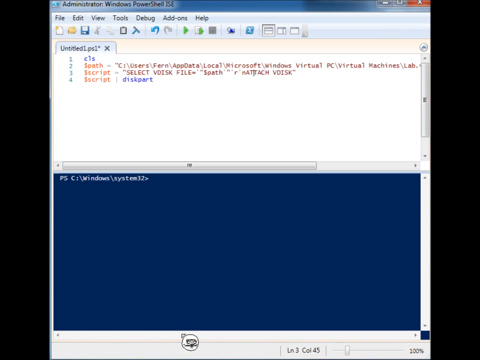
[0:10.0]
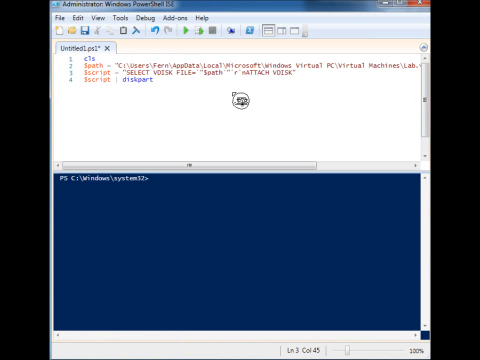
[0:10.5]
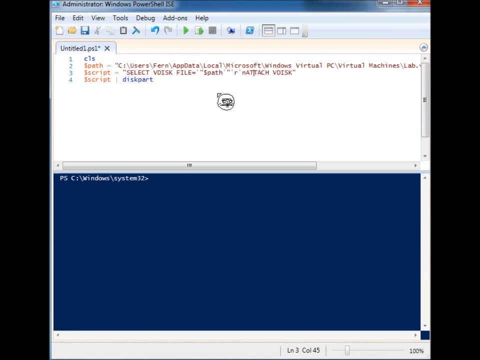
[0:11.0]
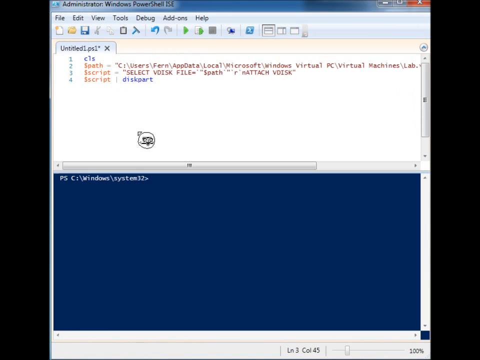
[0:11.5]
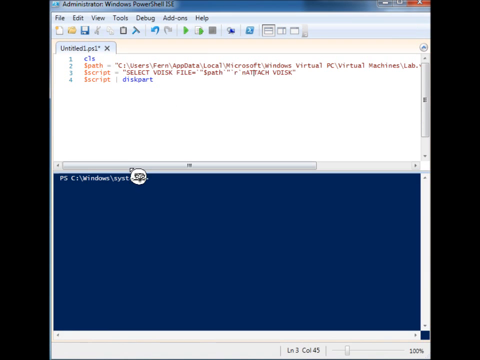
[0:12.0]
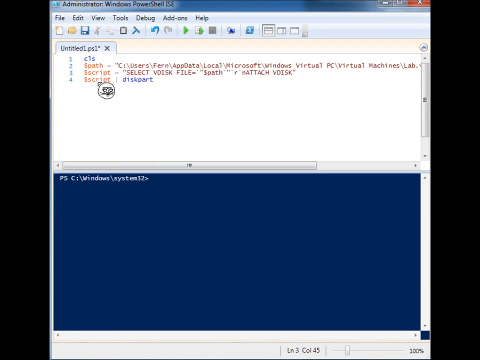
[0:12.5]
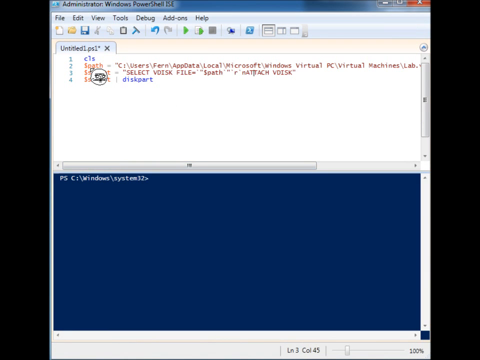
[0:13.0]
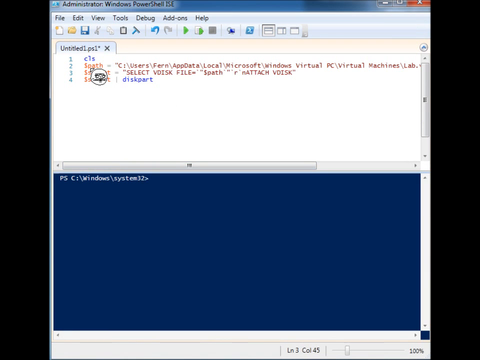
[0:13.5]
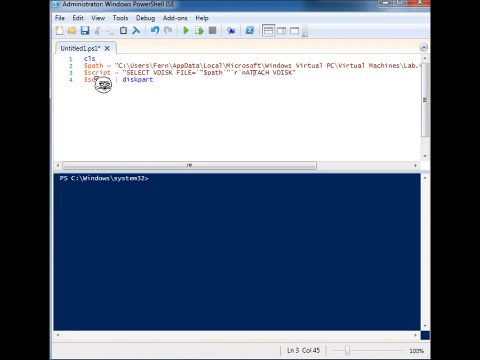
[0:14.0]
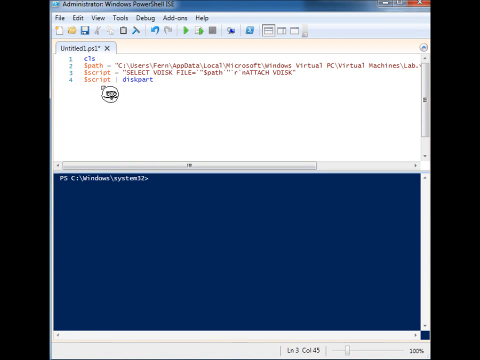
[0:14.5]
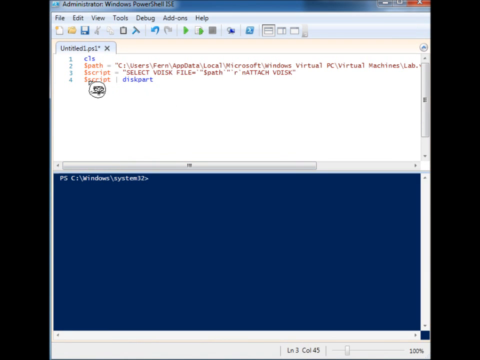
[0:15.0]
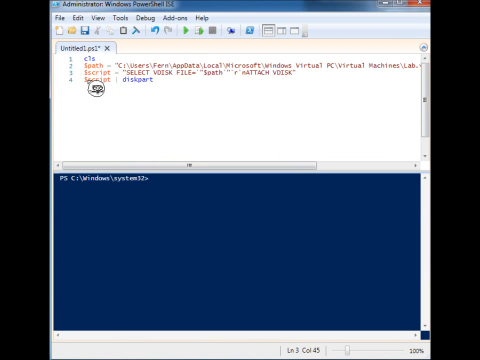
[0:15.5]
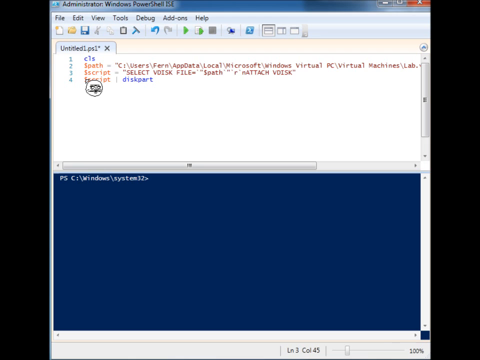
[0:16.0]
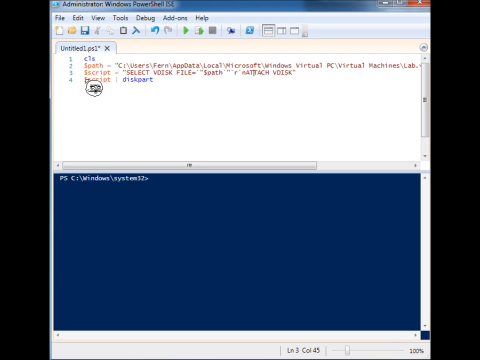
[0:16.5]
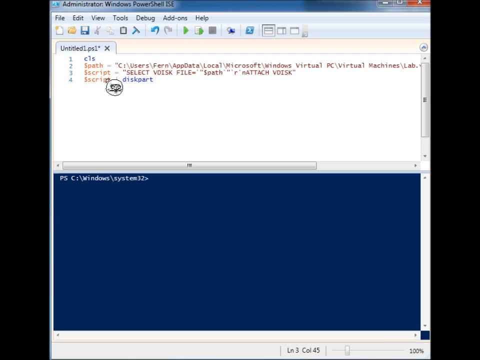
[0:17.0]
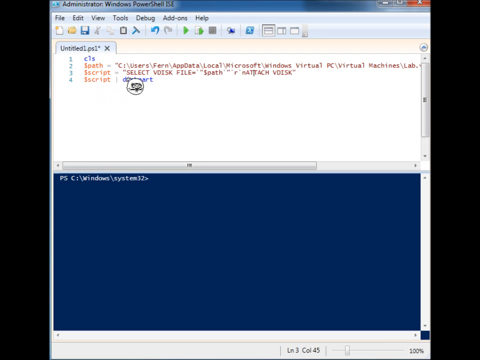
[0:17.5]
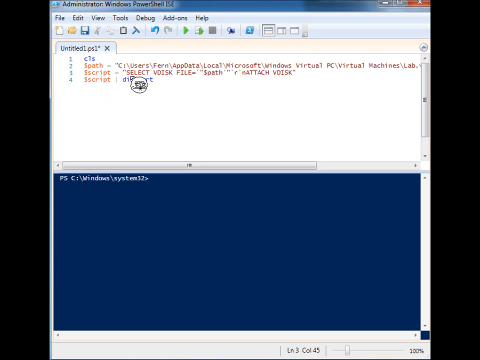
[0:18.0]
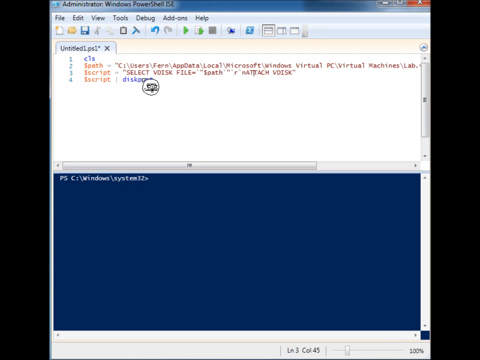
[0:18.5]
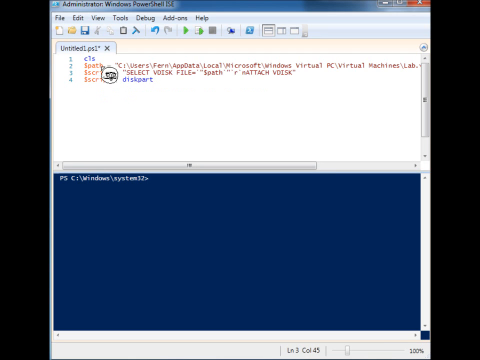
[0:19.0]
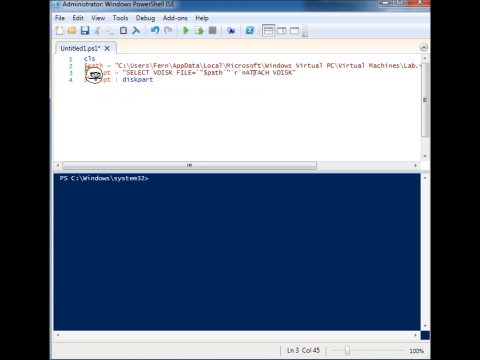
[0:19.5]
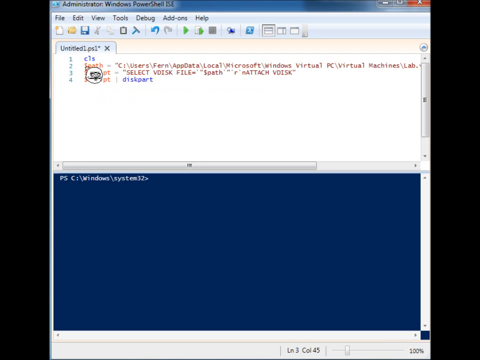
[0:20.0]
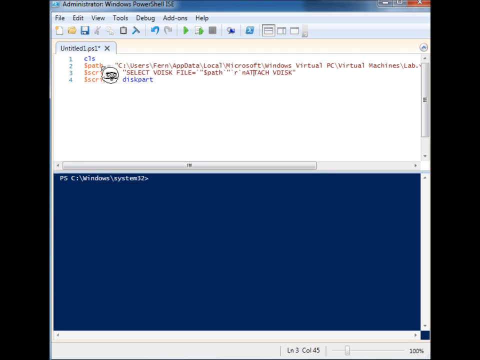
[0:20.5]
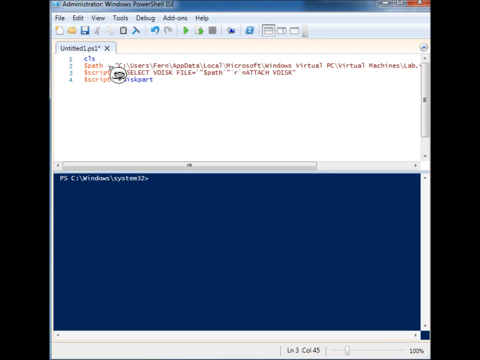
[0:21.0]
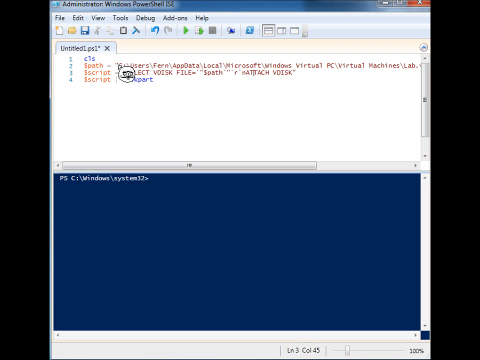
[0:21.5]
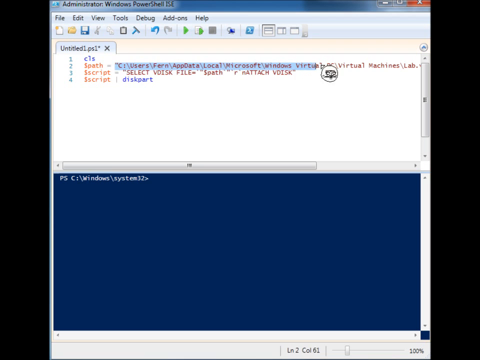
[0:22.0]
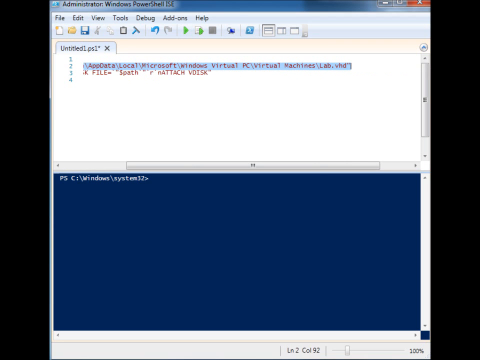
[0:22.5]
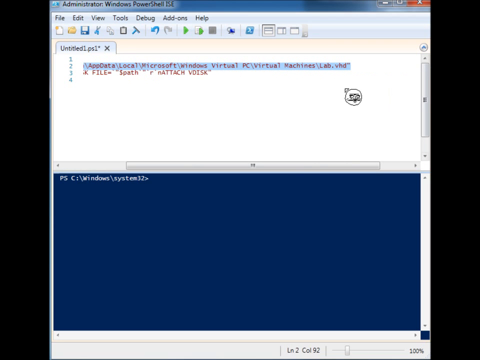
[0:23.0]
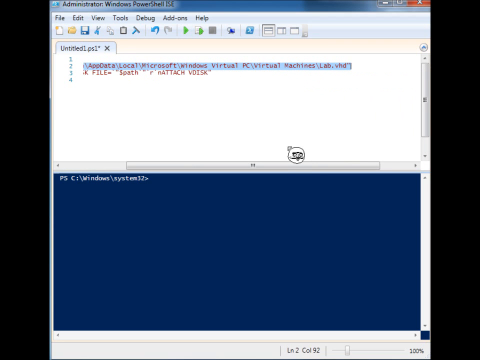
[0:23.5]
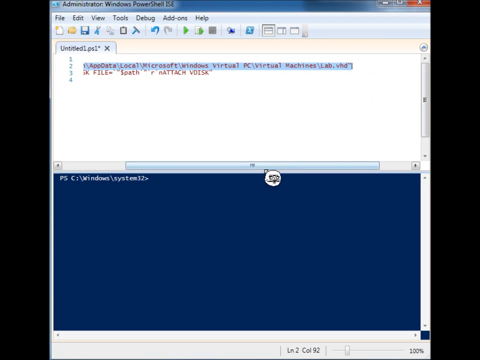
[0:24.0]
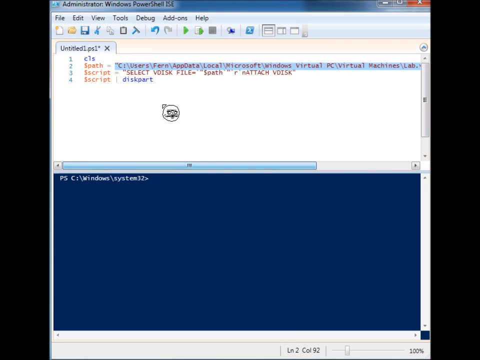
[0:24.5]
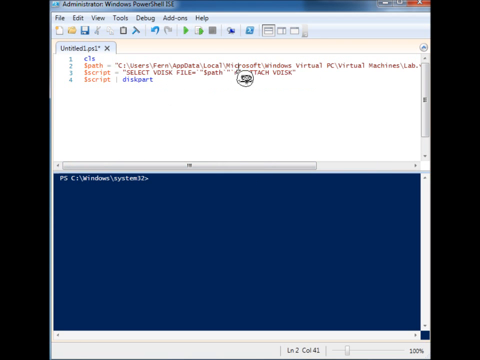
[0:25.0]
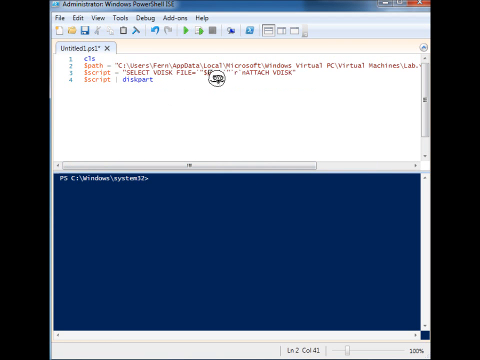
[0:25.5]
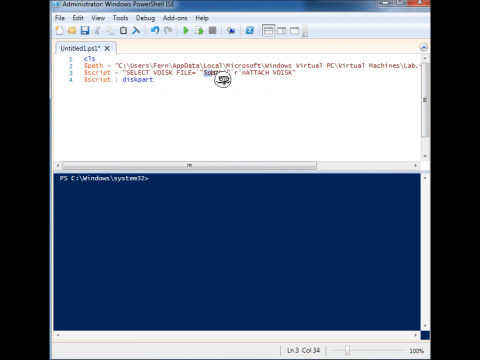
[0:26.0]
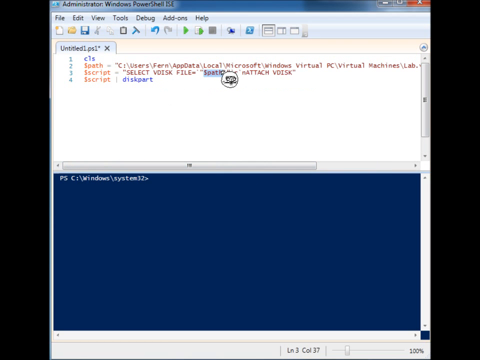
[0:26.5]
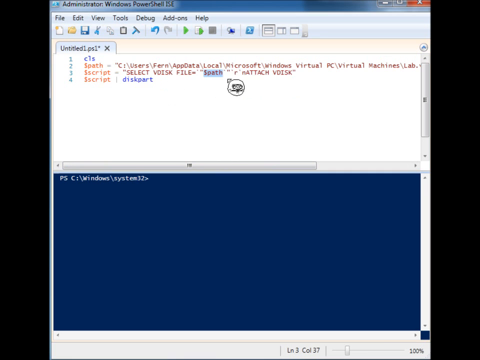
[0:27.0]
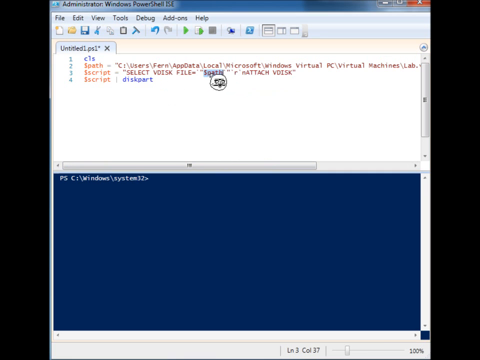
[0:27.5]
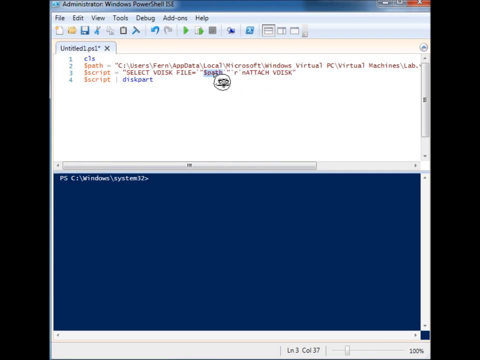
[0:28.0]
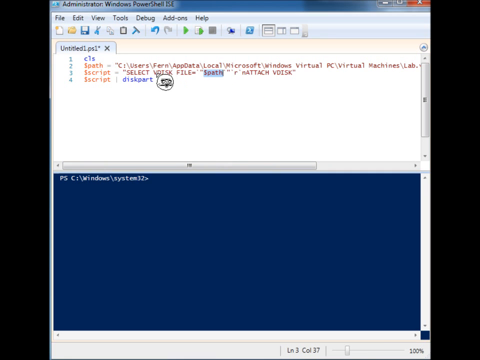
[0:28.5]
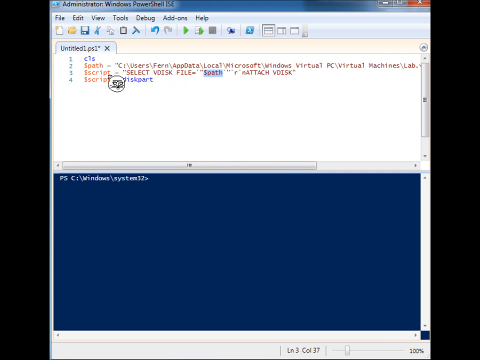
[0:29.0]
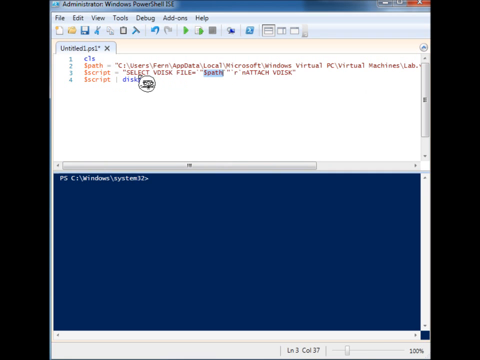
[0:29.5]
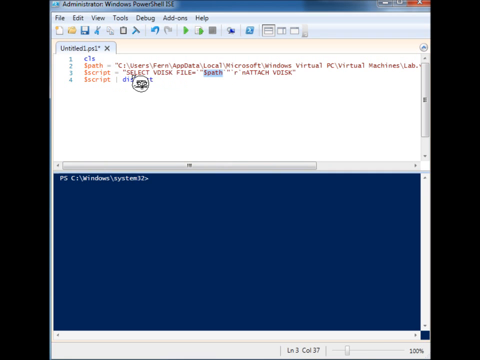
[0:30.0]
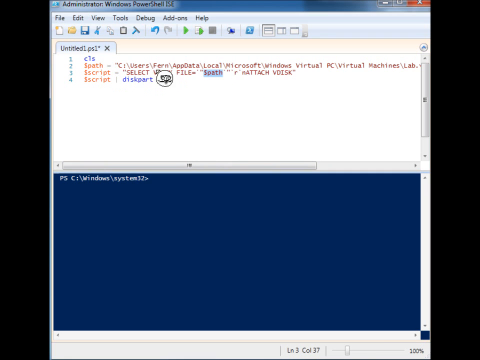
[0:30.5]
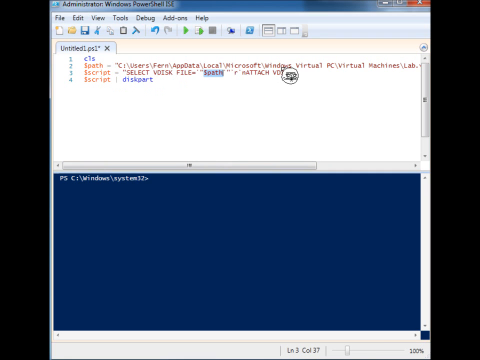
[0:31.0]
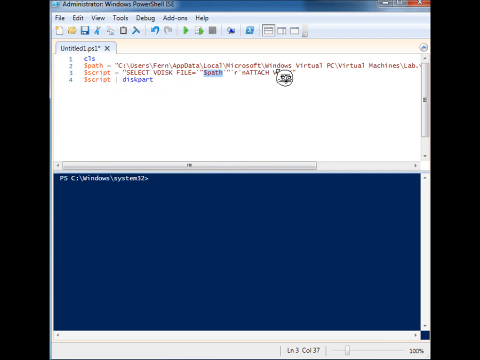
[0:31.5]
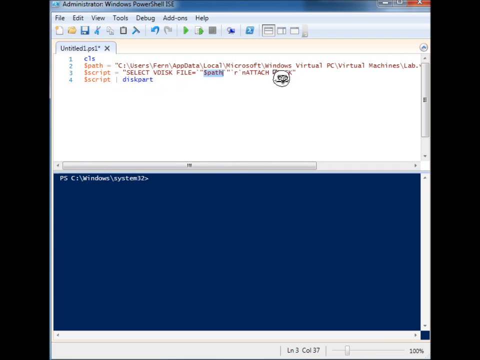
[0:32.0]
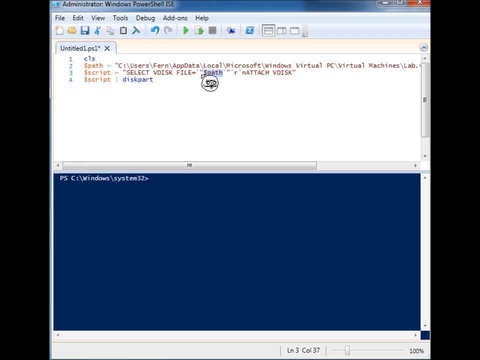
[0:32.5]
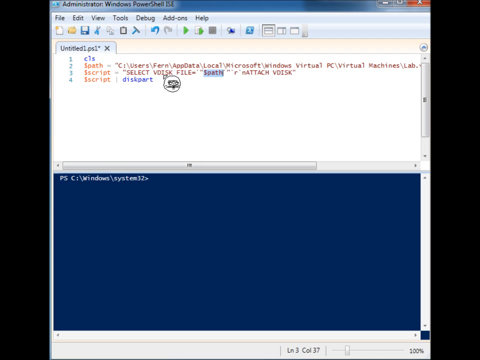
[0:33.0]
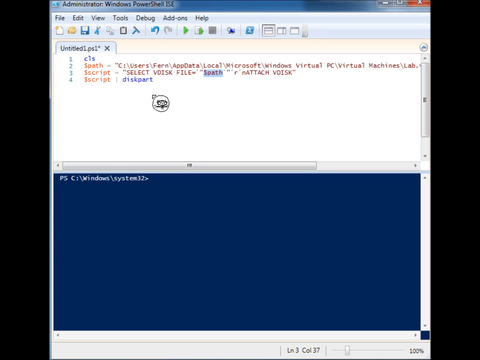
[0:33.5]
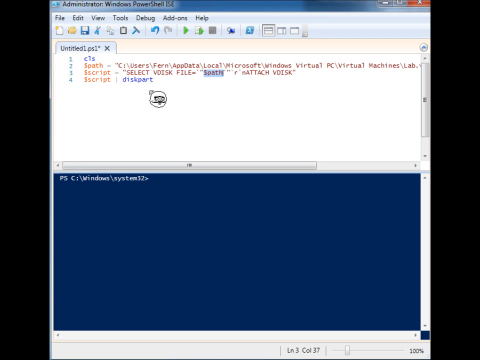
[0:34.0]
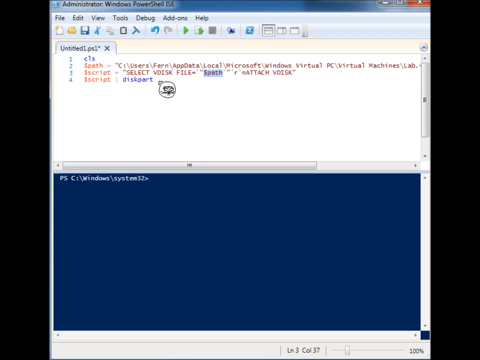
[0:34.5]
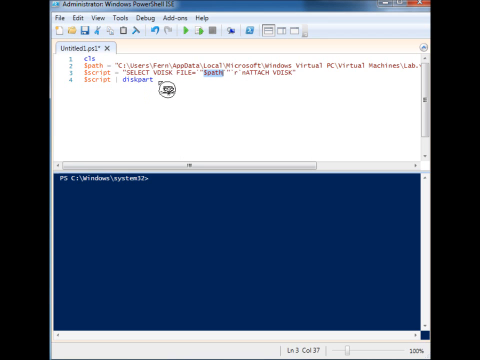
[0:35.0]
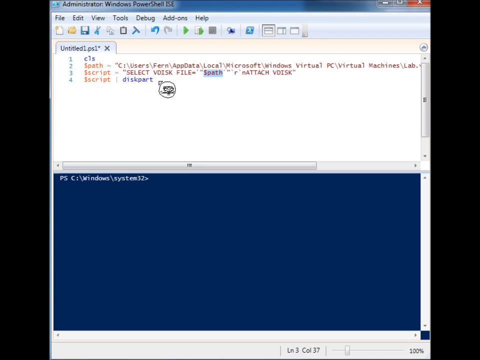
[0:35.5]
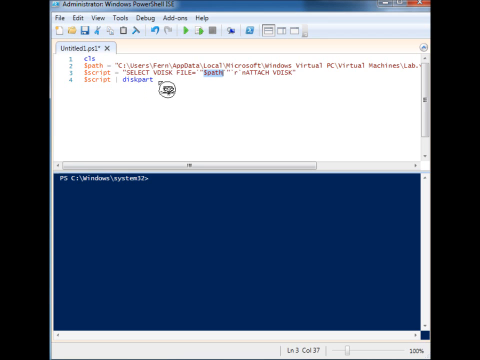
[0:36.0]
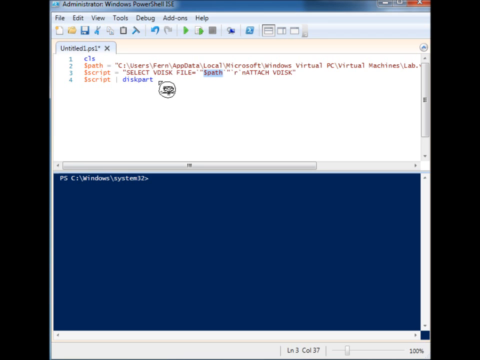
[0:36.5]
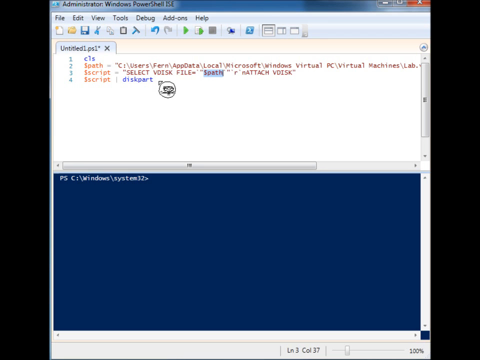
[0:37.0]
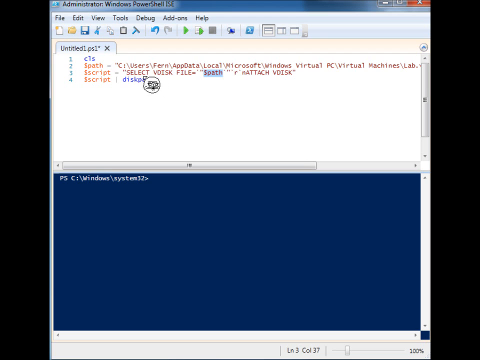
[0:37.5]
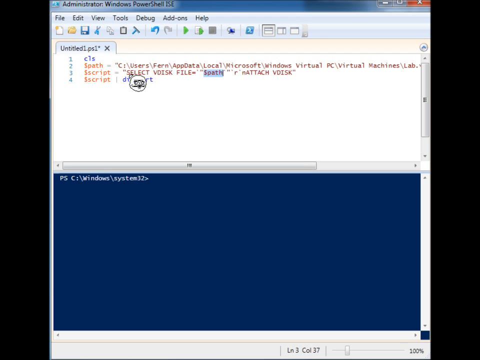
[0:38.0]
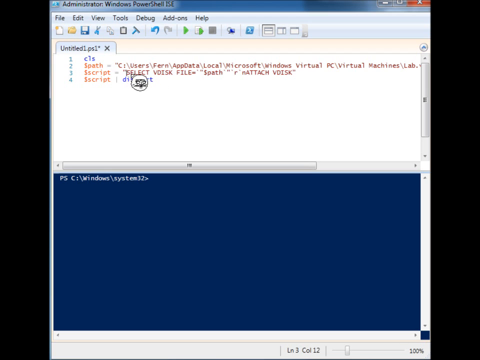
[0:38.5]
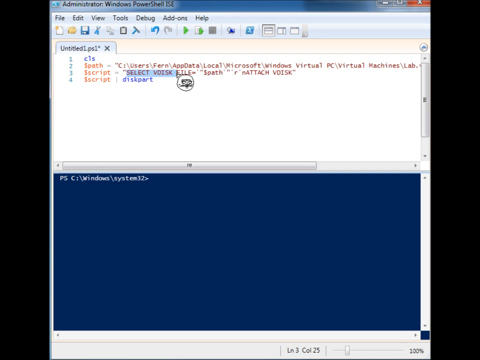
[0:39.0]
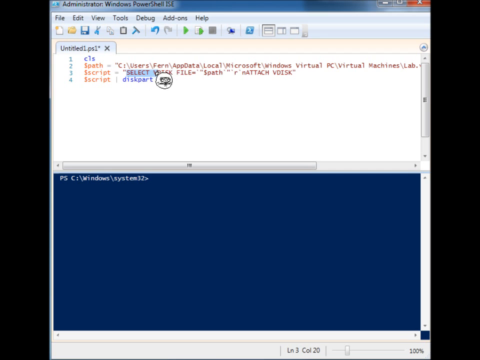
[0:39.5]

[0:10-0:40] In the Windows Administrator PowerShell, the cursor goes over the lines, highlighting line 2, a particular path for a script, then going over lines 3 and 4 of the script: a select virtual disk file line with "SP$PATH", and another line to attach the virtual disk, or vdisk. Lastly there is "disk part", which may represent partition of the disk. The PowerShell window looks like a regular Windows window, except it is divided in two halves. The top half is a white text window, numbered down the left-hand side with green numbers like a software programming window, with color-coded syntax. The bottom half looks like a typical terminal, with white text over a dark navy blue background. The cursor goes over the lines of script in the top half of the window.